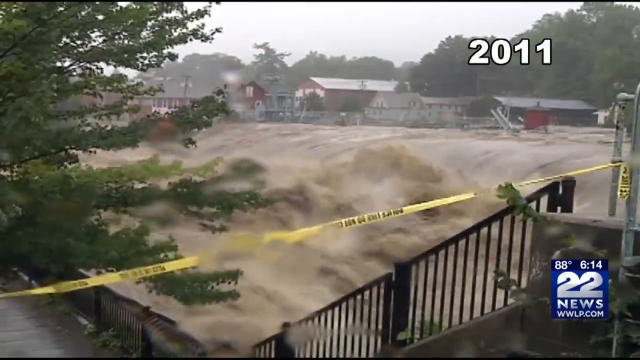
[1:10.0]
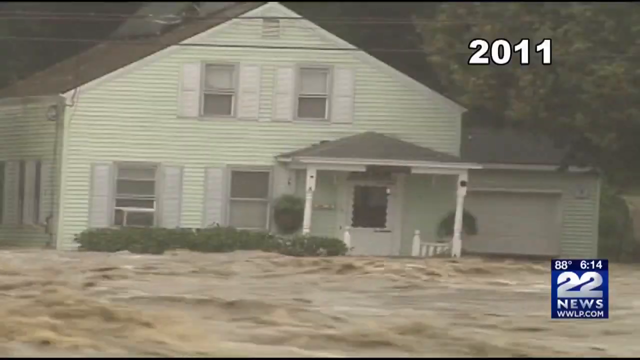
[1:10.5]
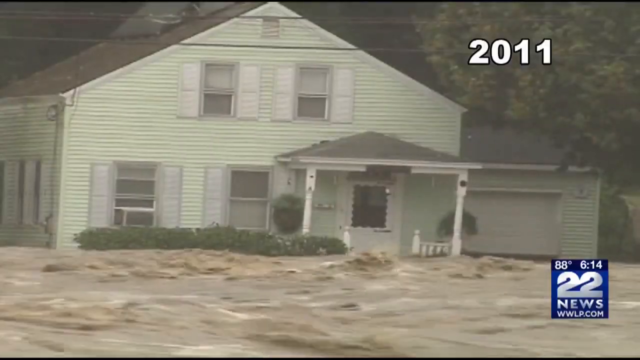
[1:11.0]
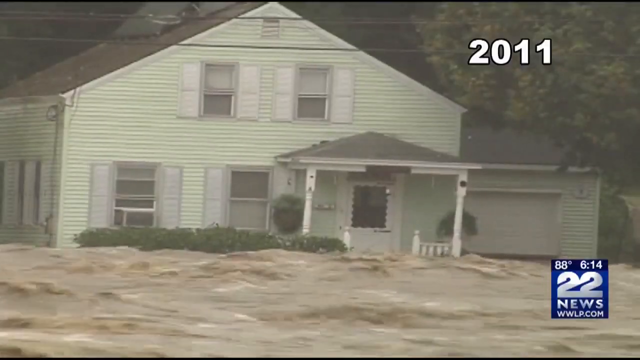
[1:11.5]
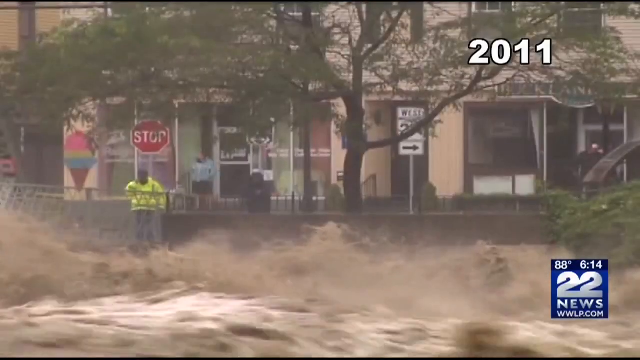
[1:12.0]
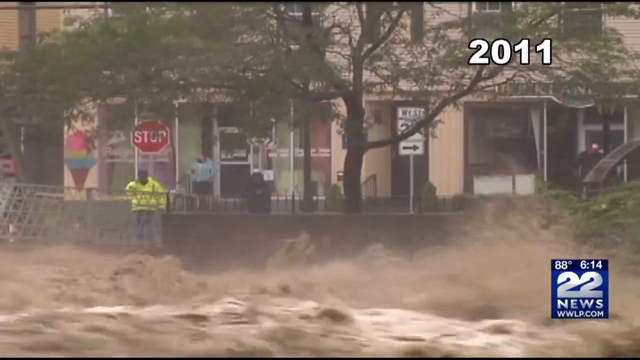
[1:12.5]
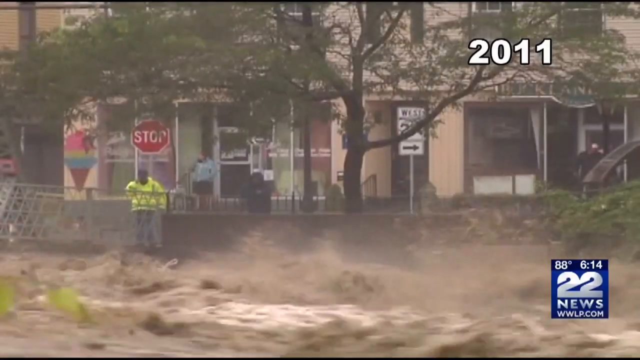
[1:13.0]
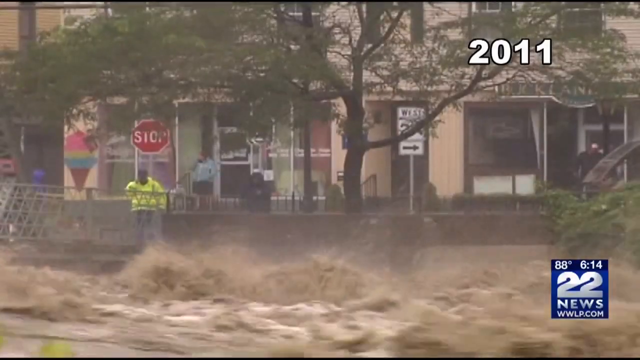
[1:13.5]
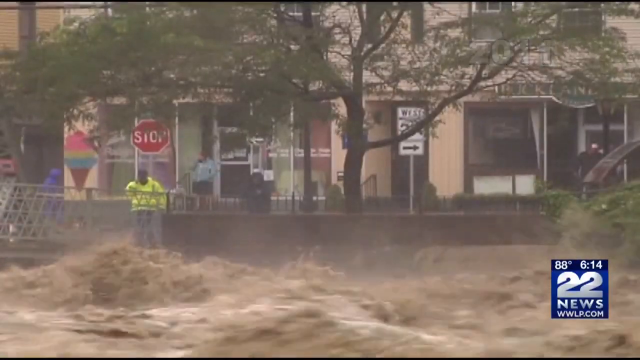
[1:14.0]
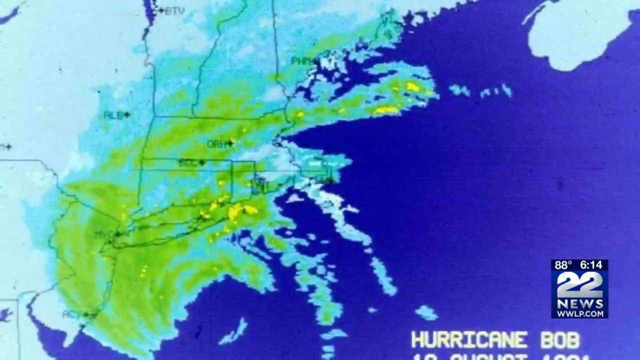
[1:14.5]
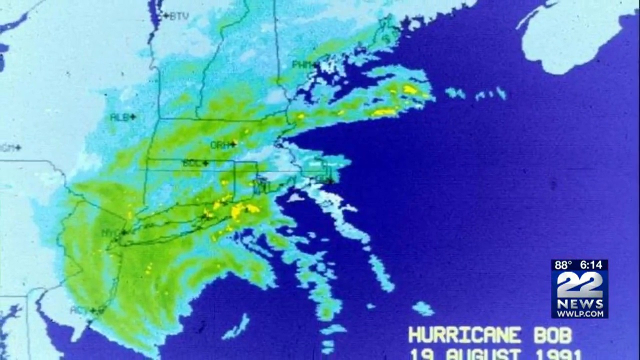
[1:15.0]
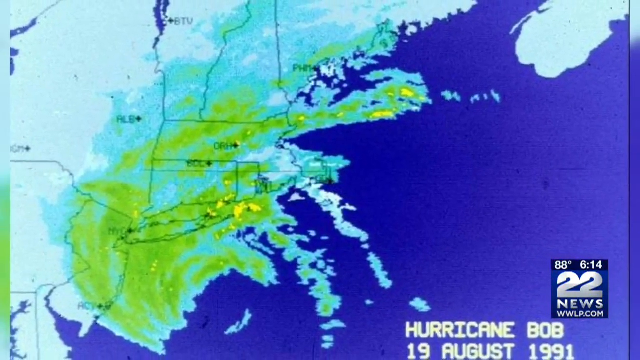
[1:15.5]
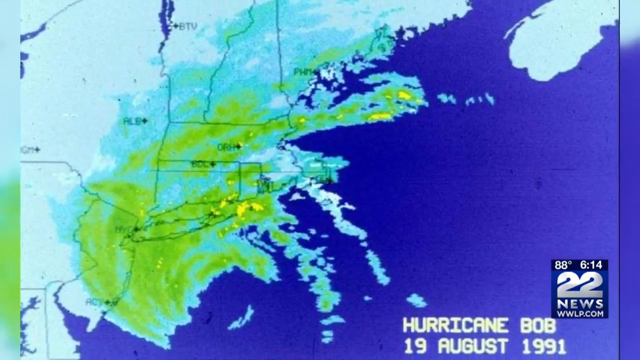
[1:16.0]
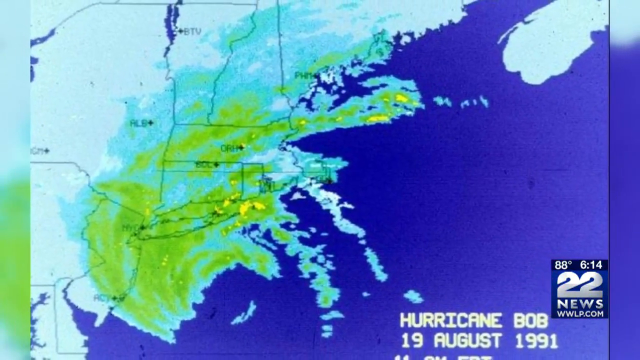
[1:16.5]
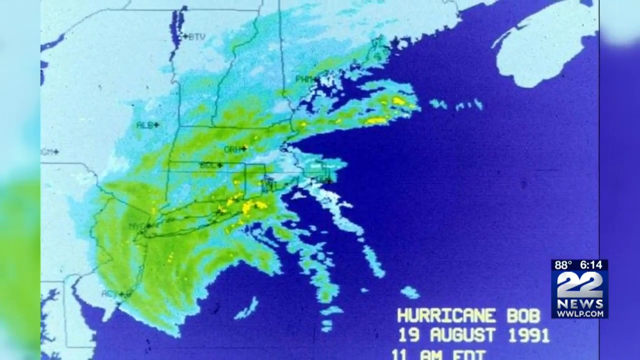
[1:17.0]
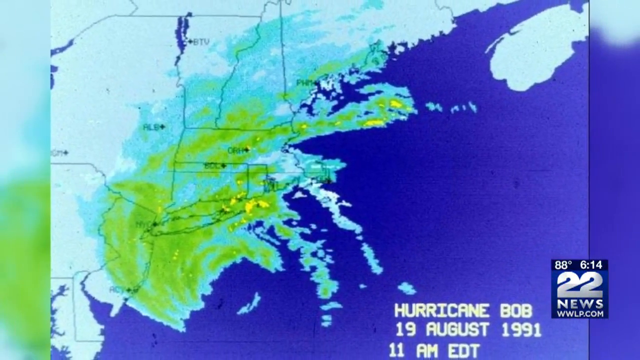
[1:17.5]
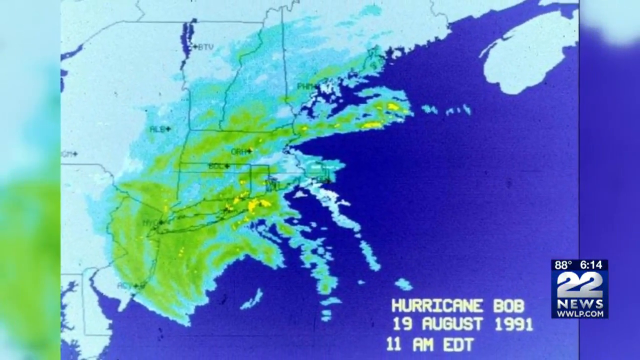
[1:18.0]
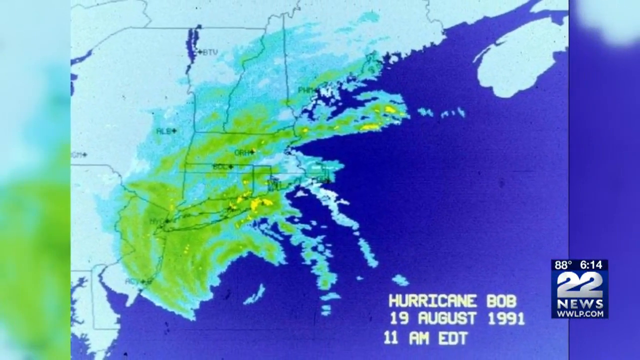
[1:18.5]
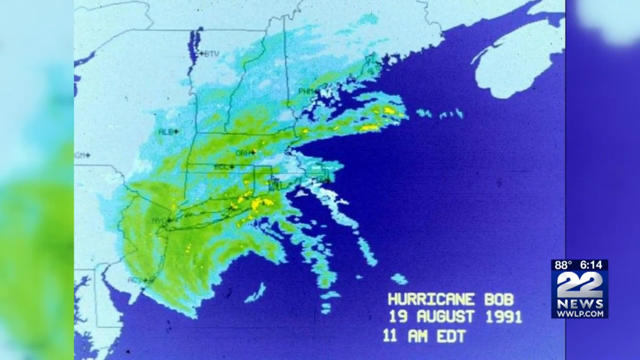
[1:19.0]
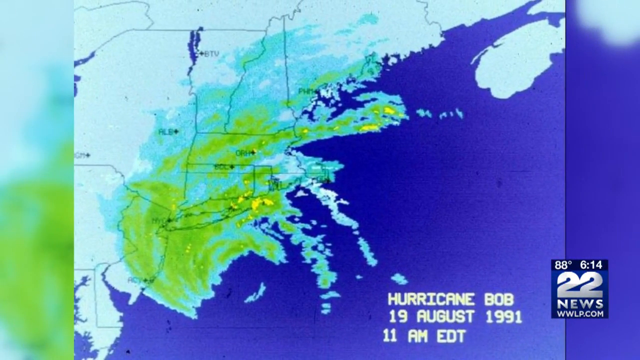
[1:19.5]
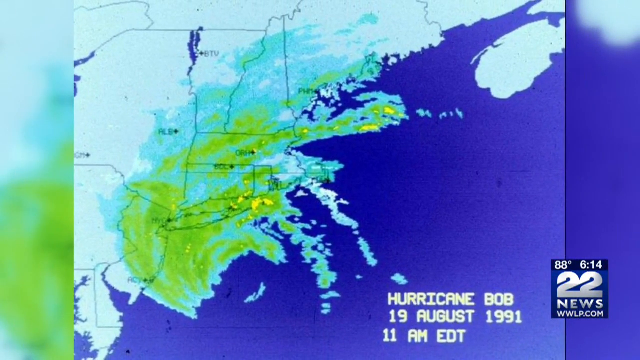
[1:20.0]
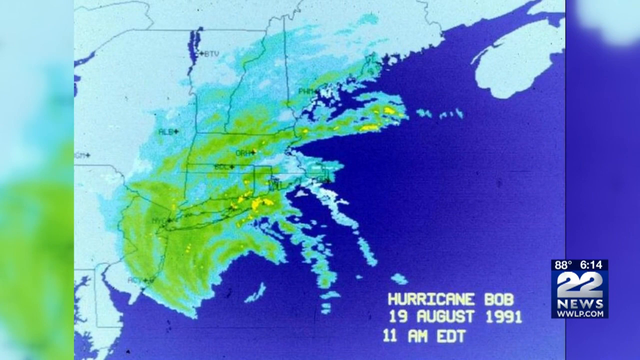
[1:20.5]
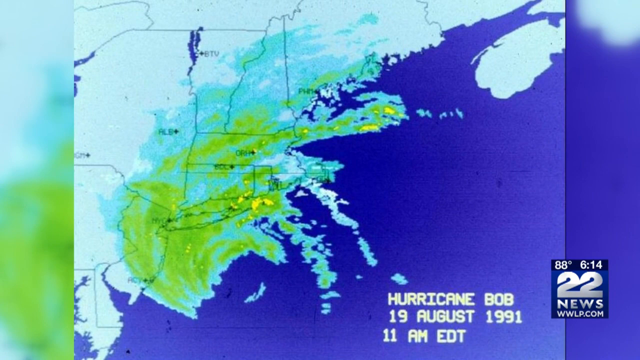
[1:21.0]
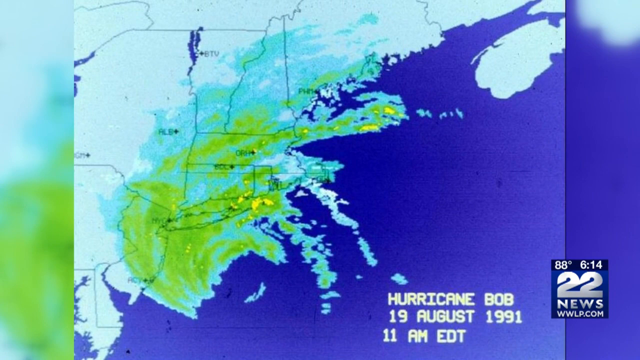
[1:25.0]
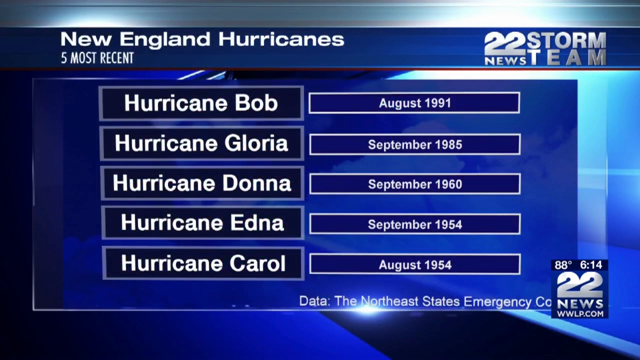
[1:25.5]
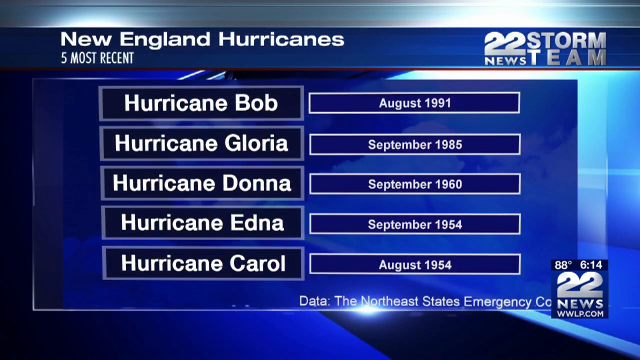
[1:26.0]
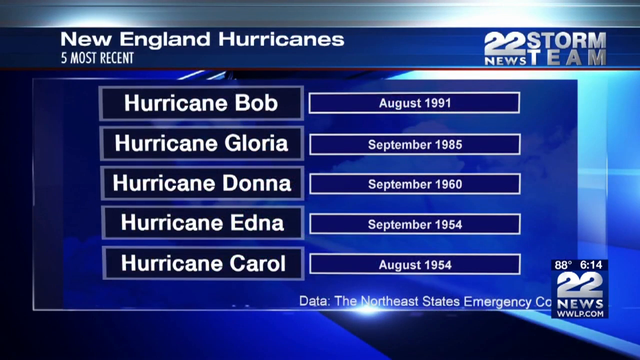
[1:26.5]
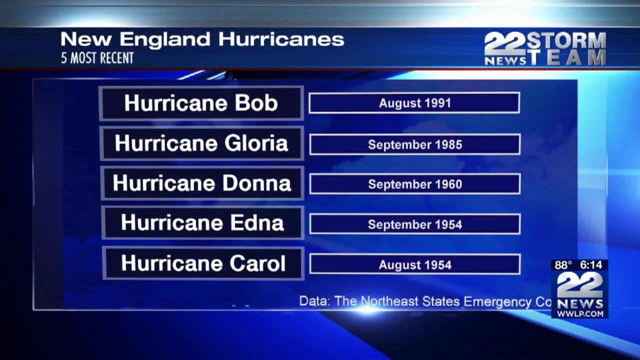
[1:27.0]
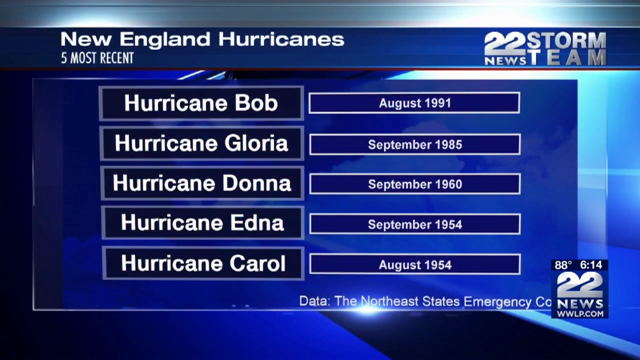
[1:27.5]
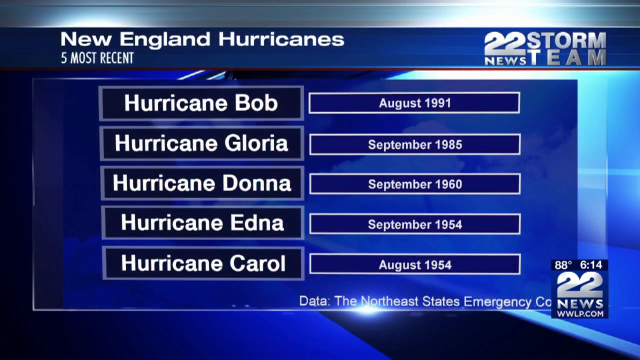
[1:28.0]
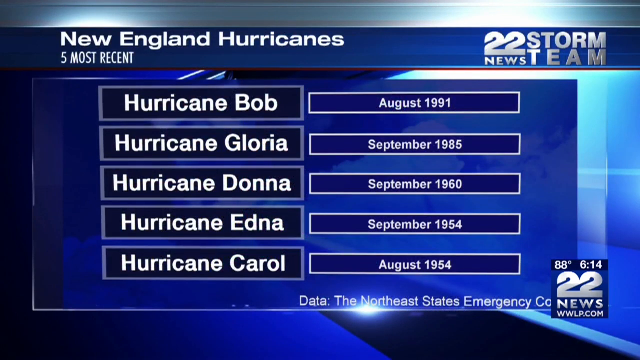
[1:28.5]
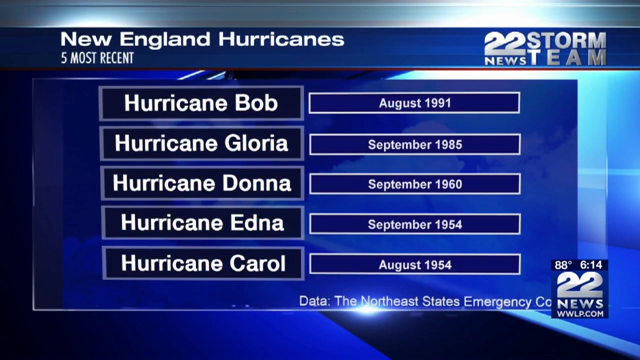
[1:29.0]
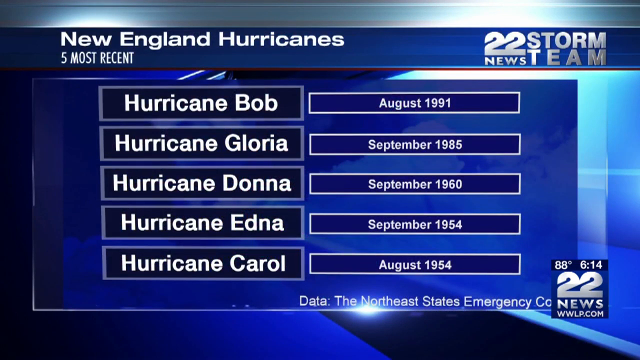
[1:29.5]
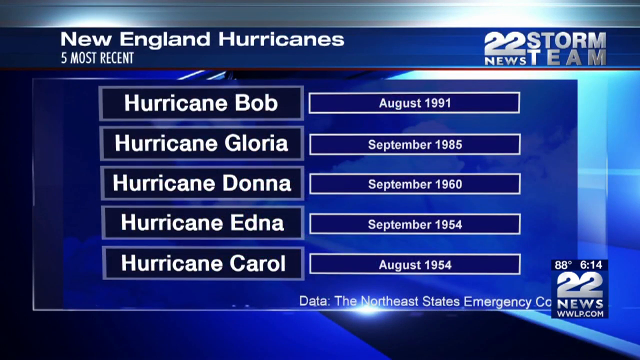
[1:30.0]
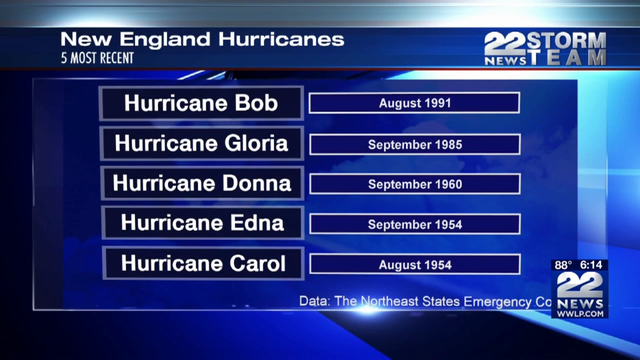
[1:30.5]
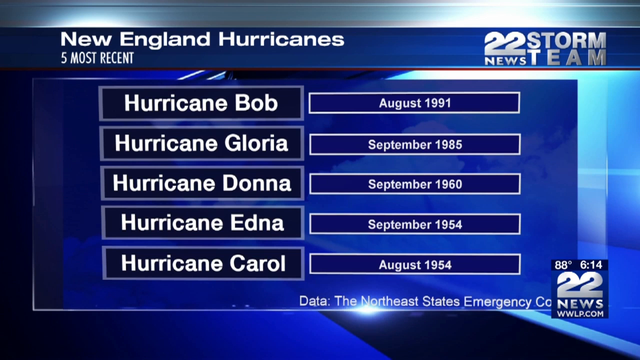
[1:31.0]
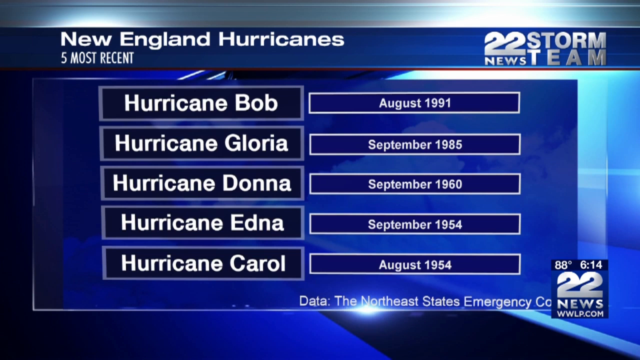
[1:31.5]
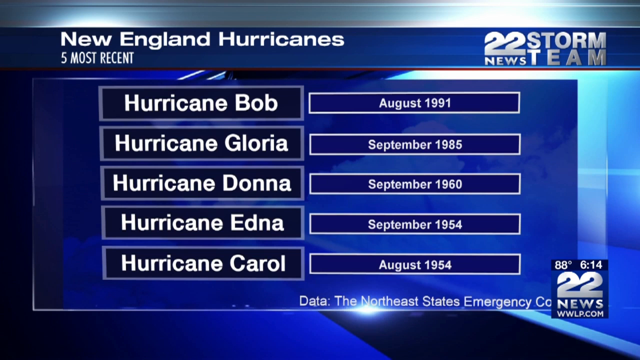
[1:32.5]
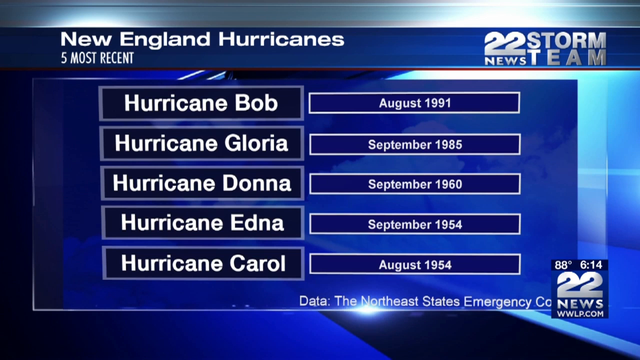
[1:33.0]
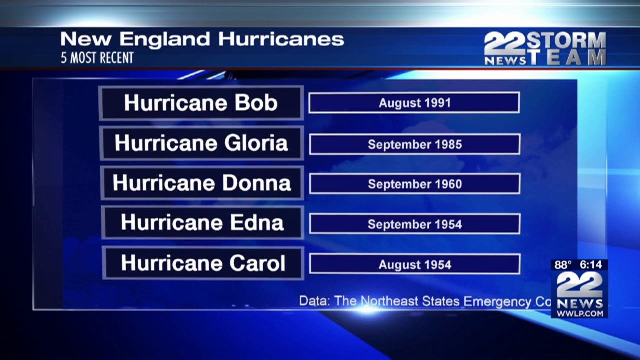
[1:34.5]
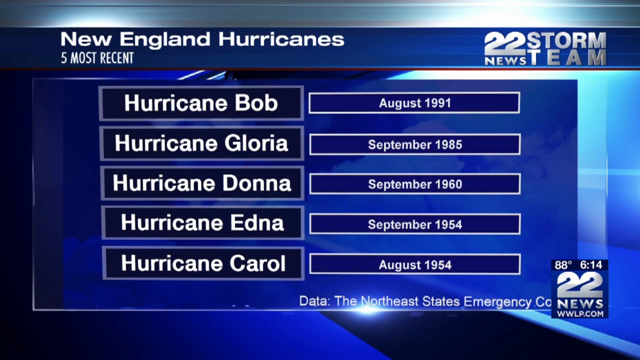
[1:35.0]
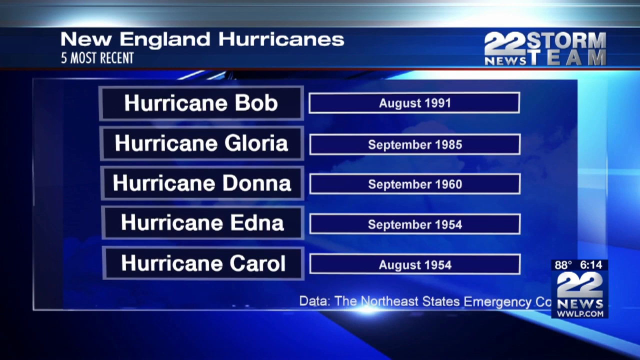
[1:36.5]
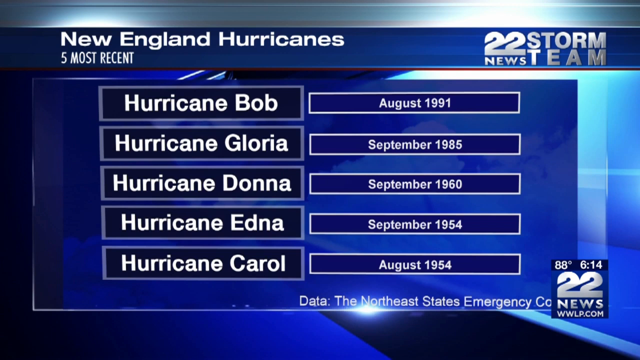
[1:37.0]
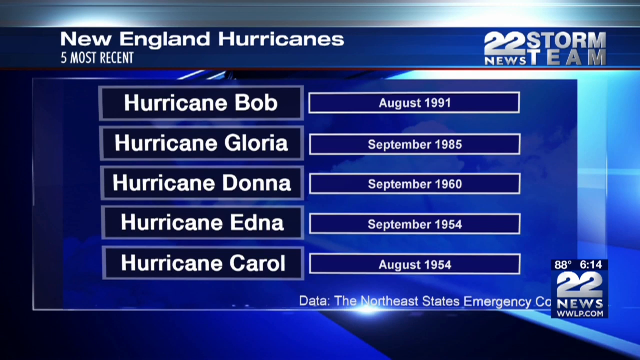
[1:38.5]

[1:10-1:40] A mint green house with a lot of windows is being flooded, with a very strong current in front of it, and the house is submerged by the water. What looks like a shop with a sign appears, along with a man staring at the floor. The shops and houses around it are flooded by the strong, high current, and some houses are already submerged. A news correspondent is on the screen. A screen shows a blue sign indicating the flood and green indicating the affected places, with the date displayed as "19th of August 1991". Another display shows the five most recent places affected by the hurricane, with times and dates.